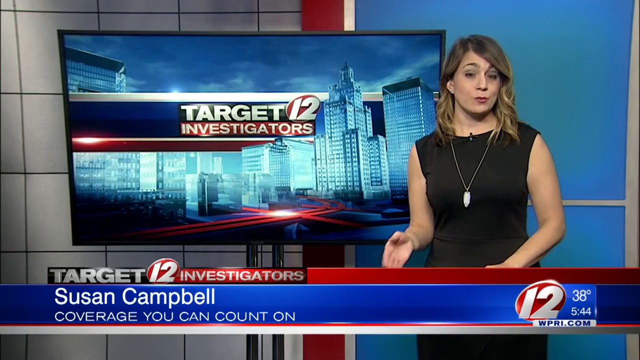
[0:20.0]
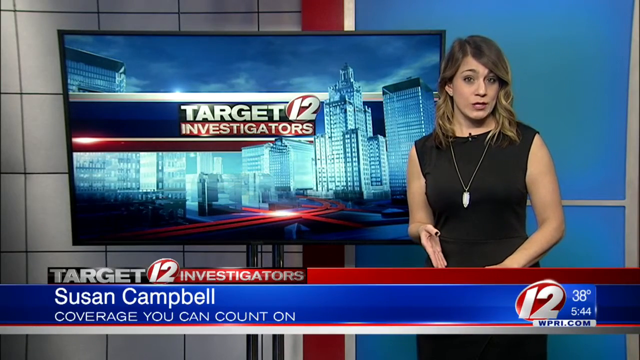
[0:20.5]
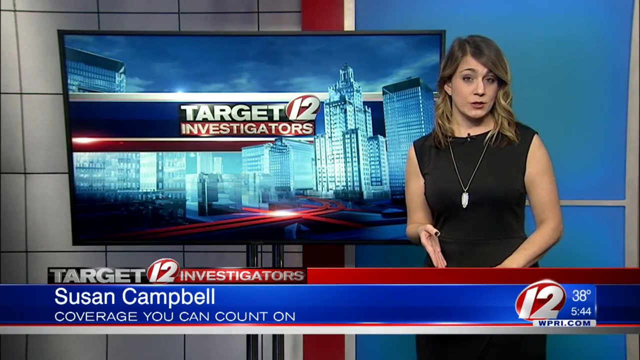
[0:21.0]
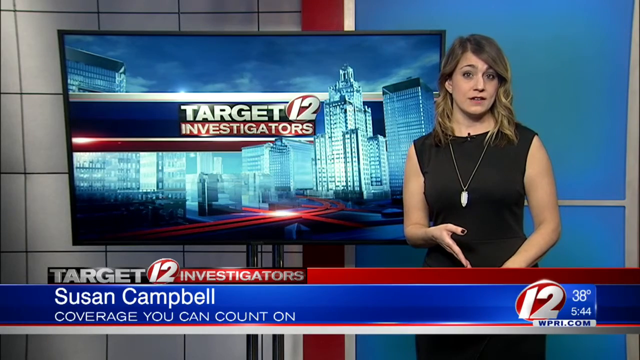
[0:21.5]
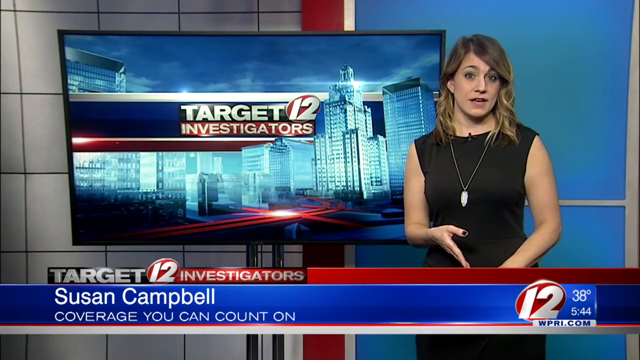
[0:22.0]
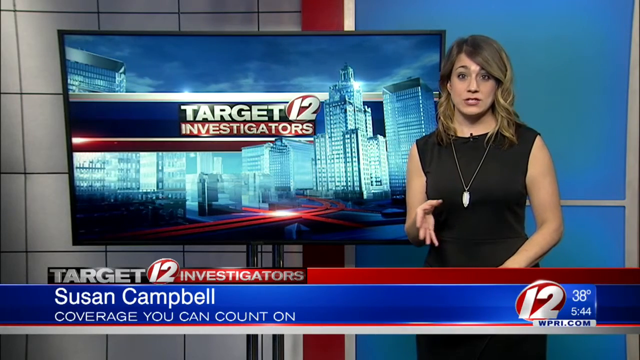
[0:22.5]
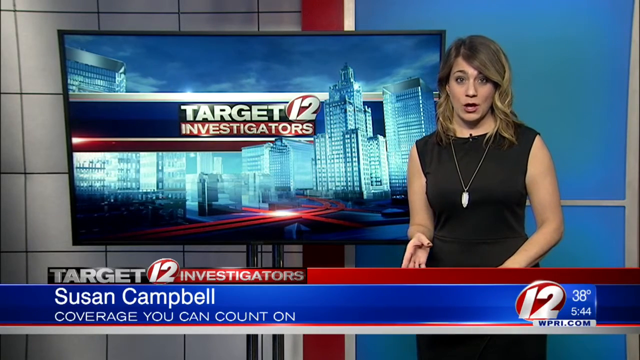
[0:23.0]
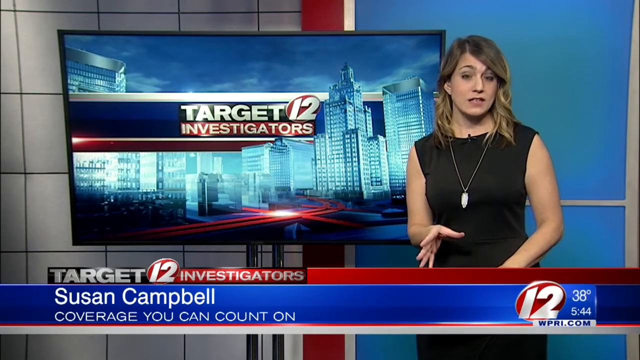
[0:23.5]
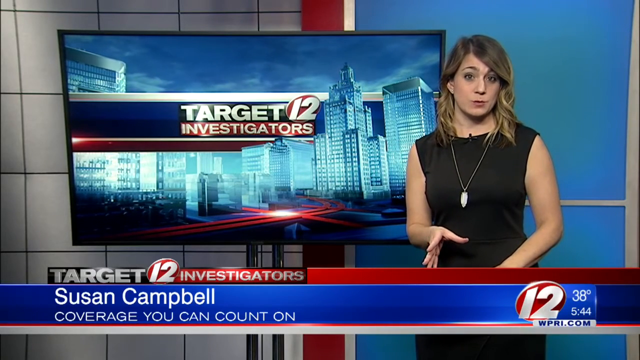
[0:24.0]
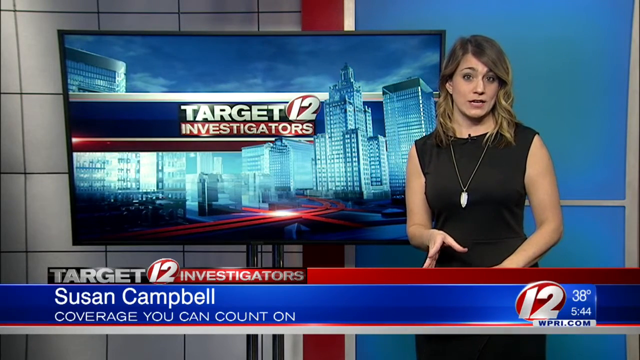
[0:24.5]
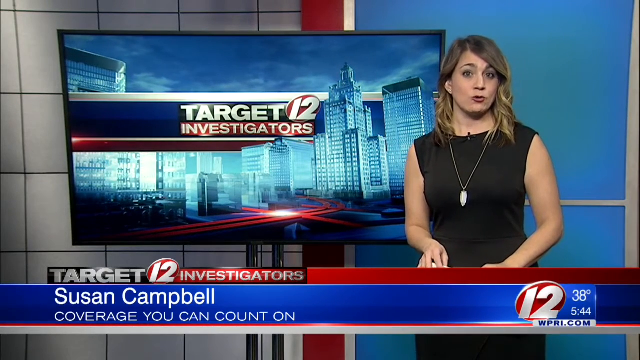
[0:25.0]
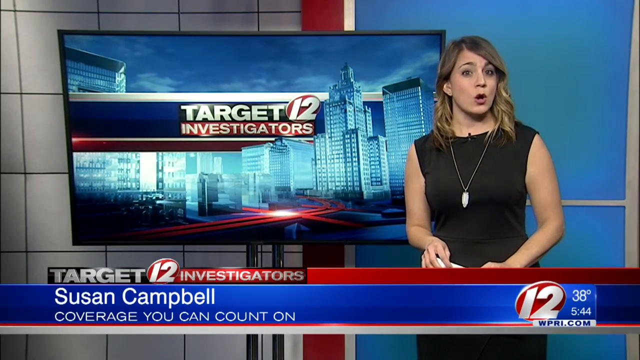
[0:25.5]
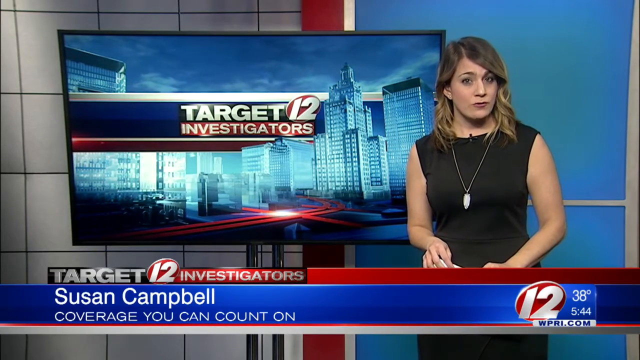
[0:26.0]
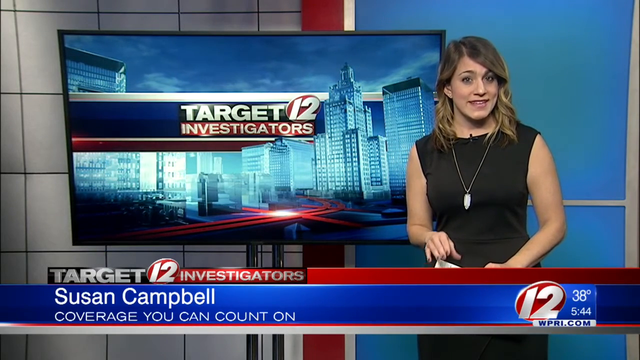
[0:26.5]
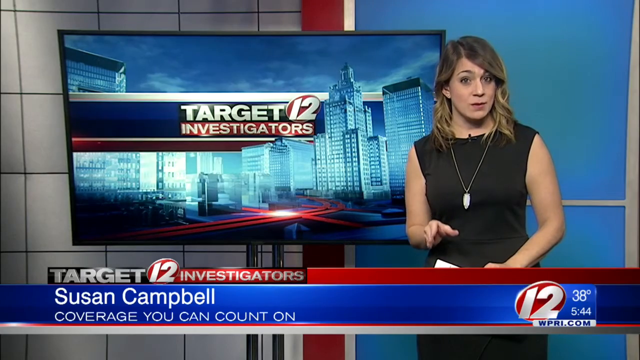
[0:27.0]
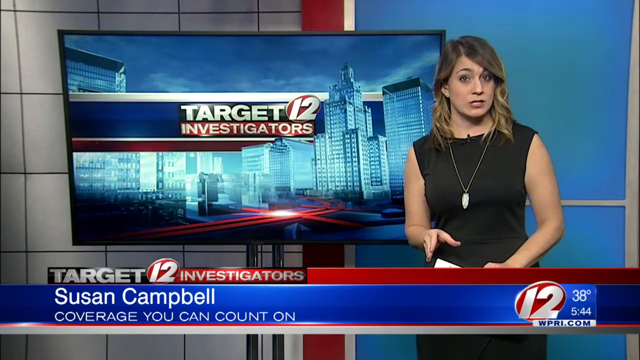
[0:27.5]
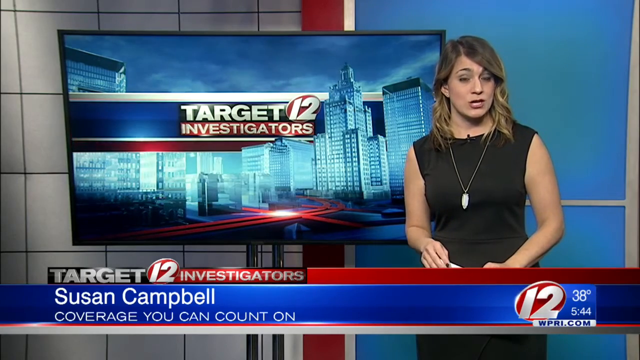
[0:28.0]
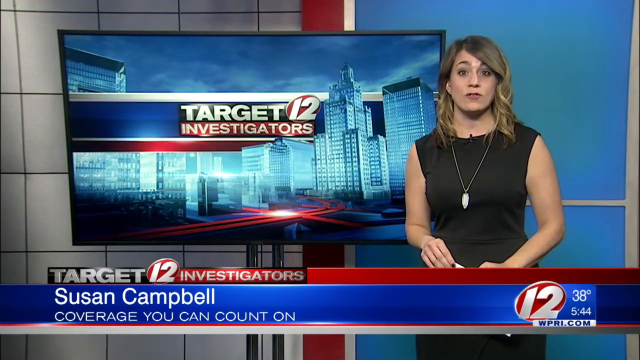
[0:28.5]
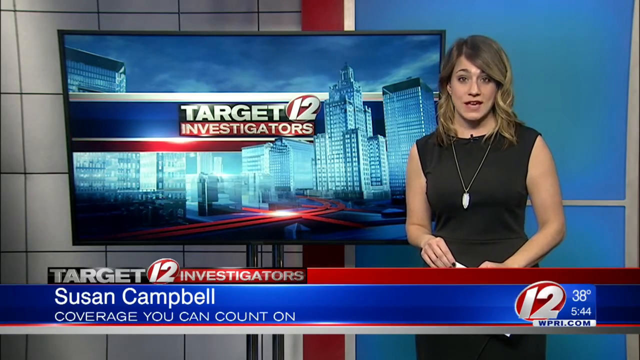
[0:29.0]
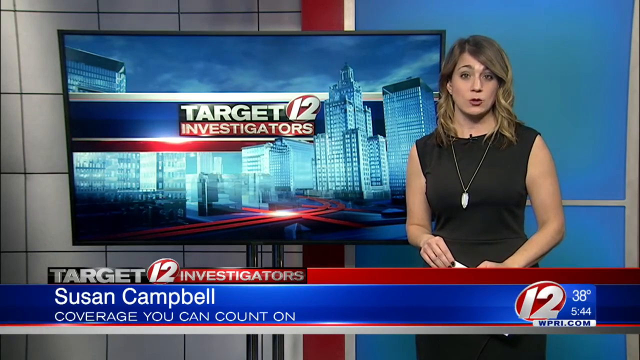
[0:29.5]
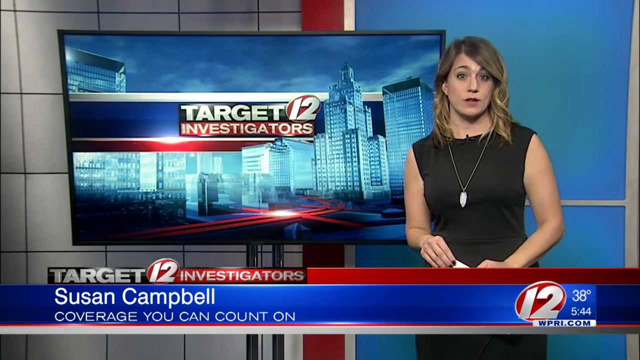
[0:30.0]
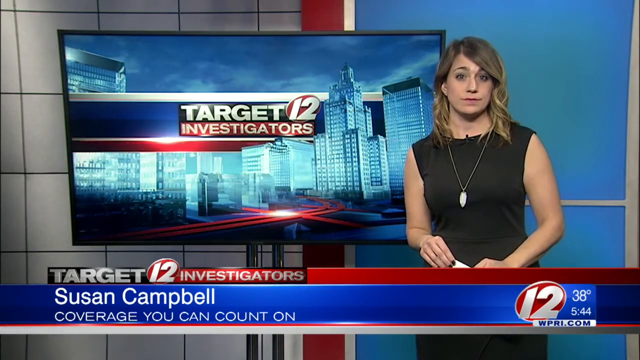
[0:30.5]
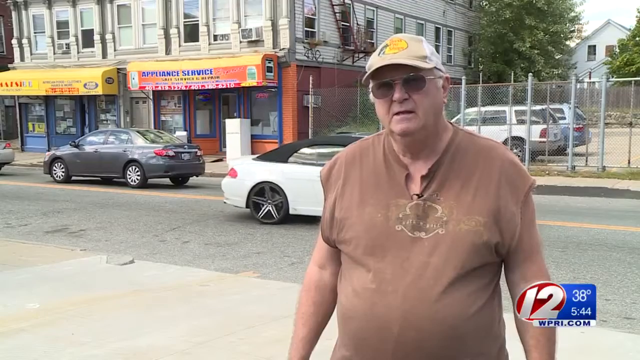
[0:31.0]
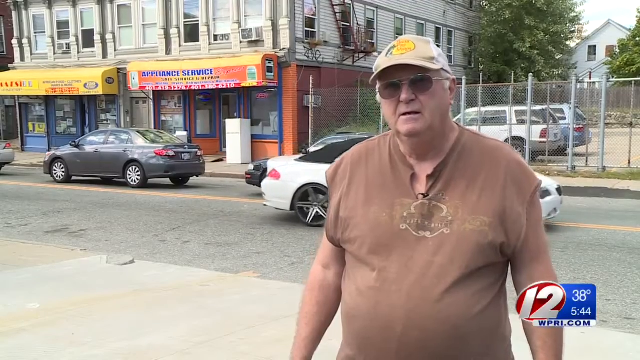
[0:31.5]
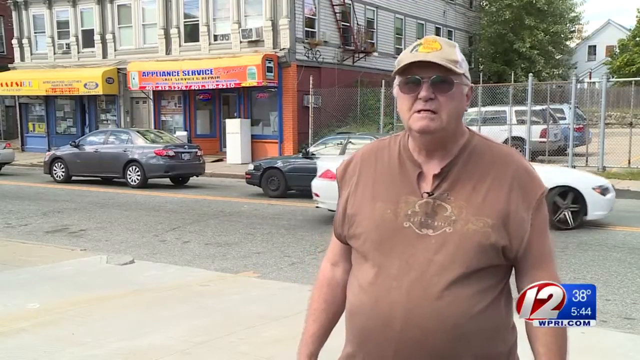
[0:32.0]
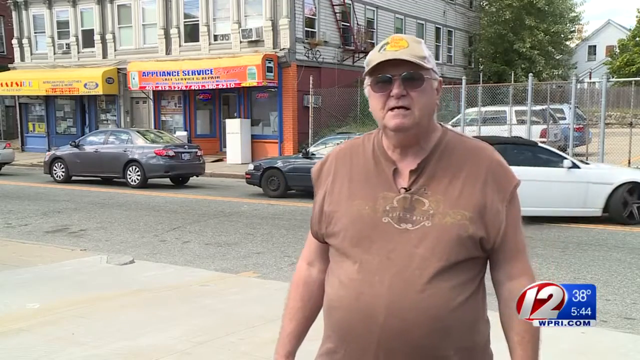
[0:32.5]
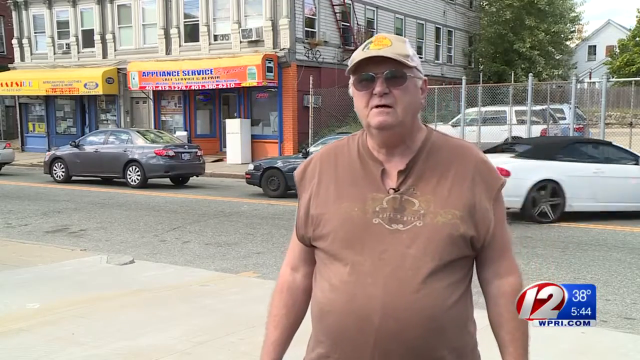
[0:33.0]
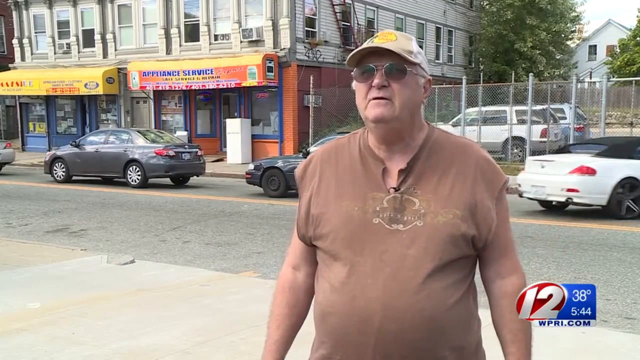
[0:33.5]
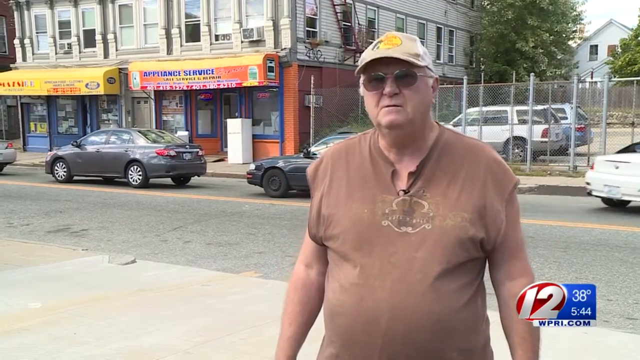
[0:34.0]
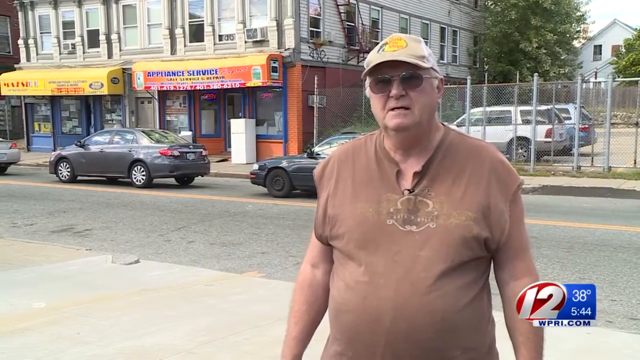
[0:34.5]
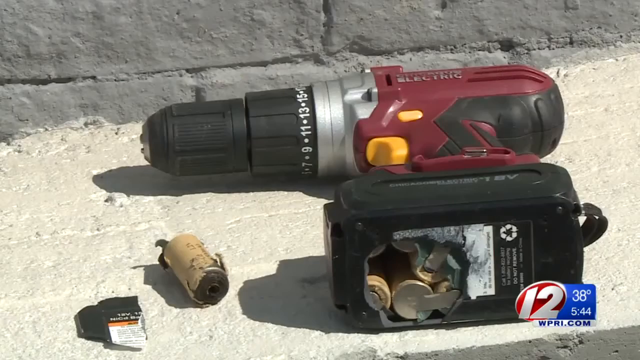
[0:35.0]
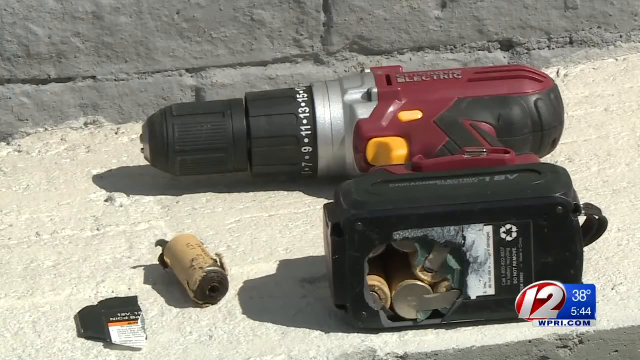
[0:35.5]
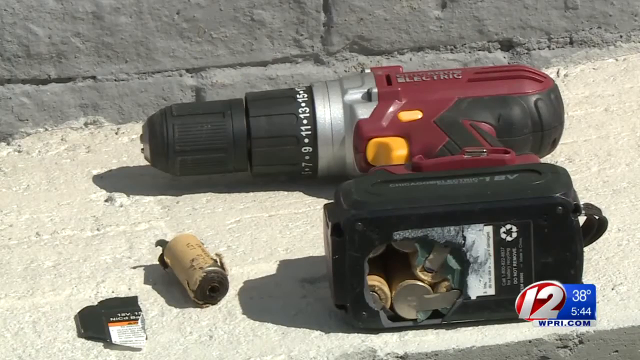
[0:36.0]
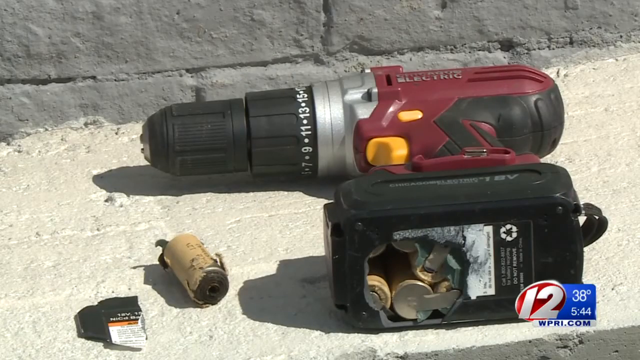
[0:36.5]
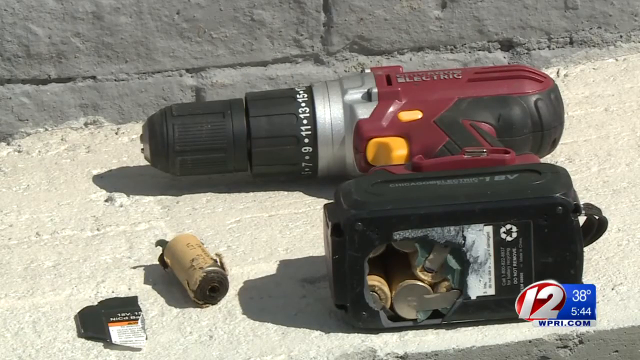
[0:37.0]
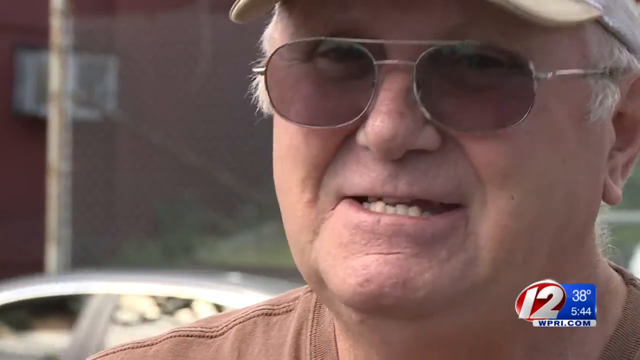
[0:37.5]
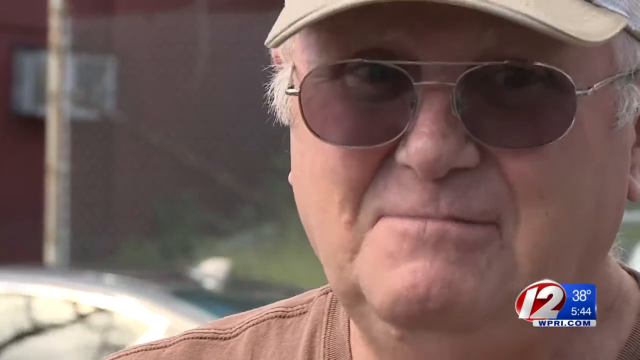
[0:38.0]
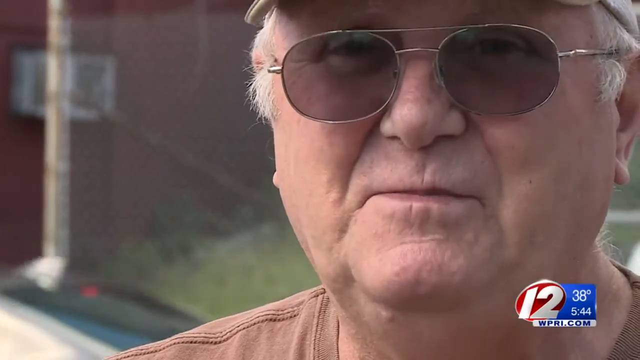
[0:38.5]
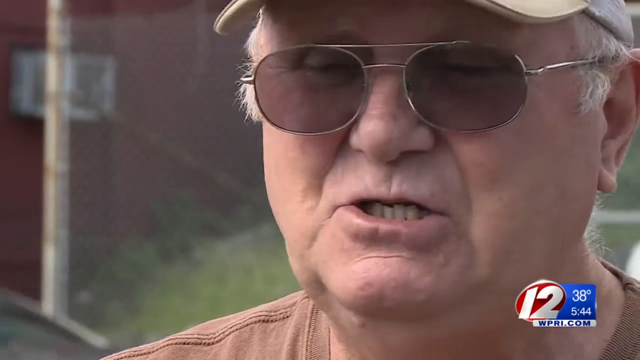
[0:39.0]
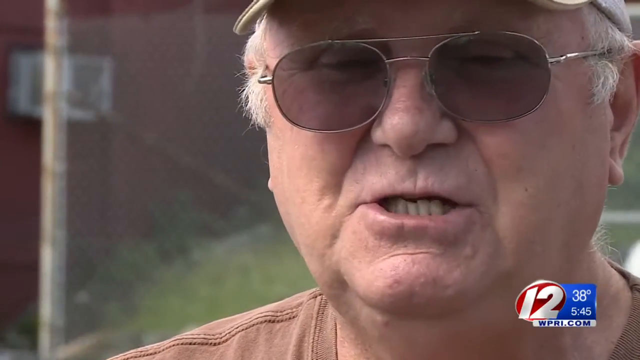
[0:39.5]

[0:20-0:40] A woman news anchor stands on the right side of a large television screen. On the screen it says "target 12 investigators," and at the very bottom it says "Susan Campbell," likely the anchor's name. She gestures toward the camera with her right hand outstretched in a handshaking motion, as if explaining something, and does this a couple of times, moving her hand left to right before opening it up. She then grasps a piece of paper with her right hand; only part of it is visible because her lower half is partly out of frame. She looks intently, directly at the camera, apparently explaining something serious. She gestures her right hand toward the camera again as if placing emphasis on her words, then nods to the camera as she finishes a sentence. The video then cuts to footage of a man recorded on the street. He wears a shirt with cut-off sleeves and a Bass Pro Shops hat, looks to be elderly, and is on the right side of the screen.